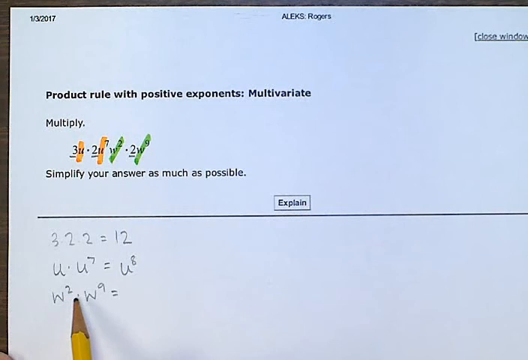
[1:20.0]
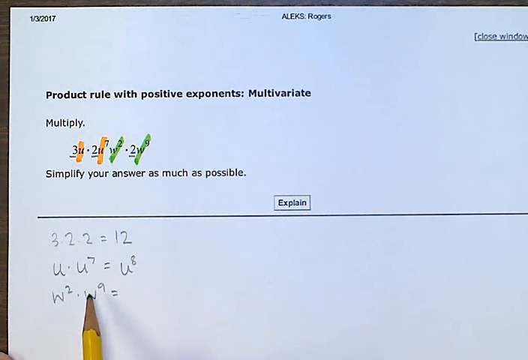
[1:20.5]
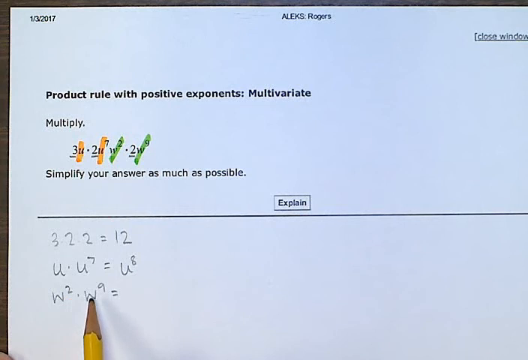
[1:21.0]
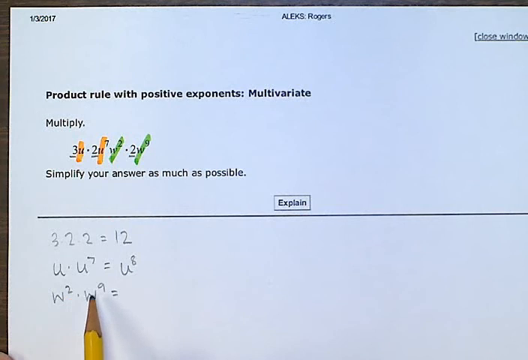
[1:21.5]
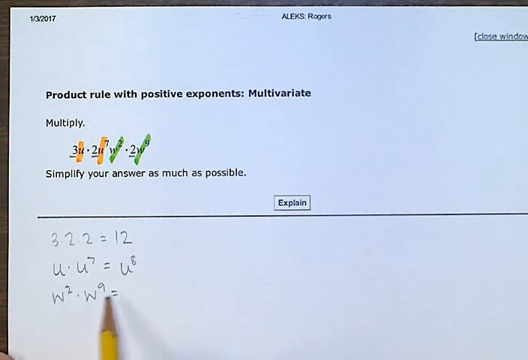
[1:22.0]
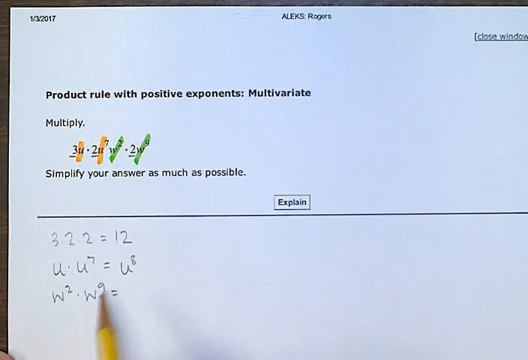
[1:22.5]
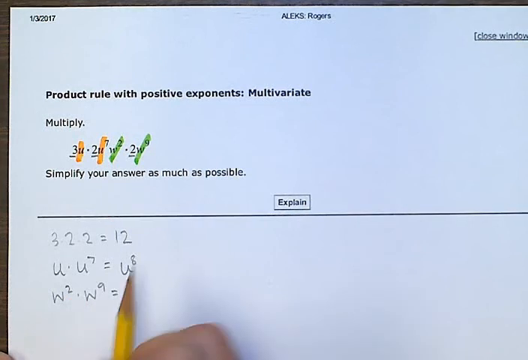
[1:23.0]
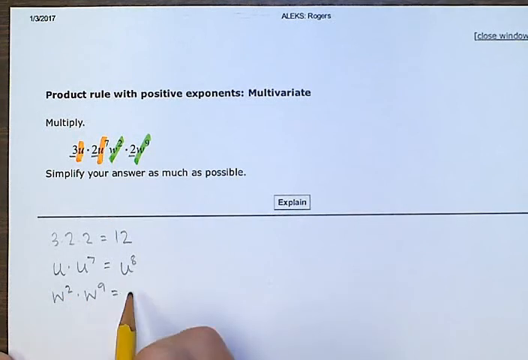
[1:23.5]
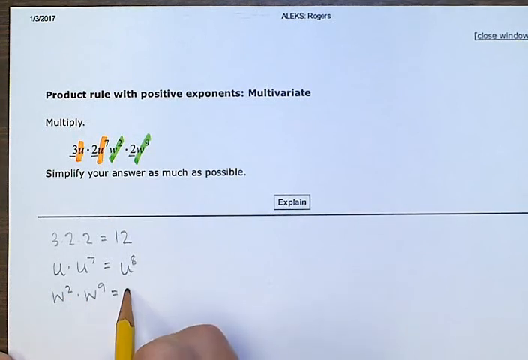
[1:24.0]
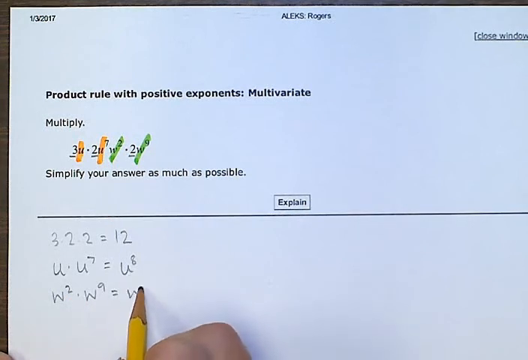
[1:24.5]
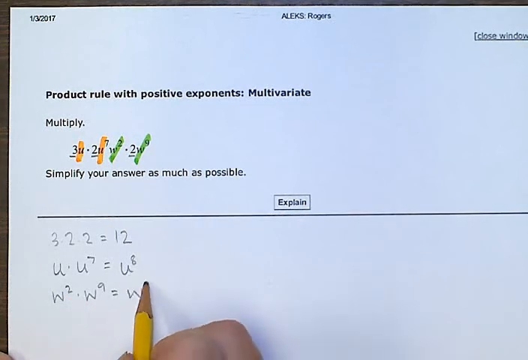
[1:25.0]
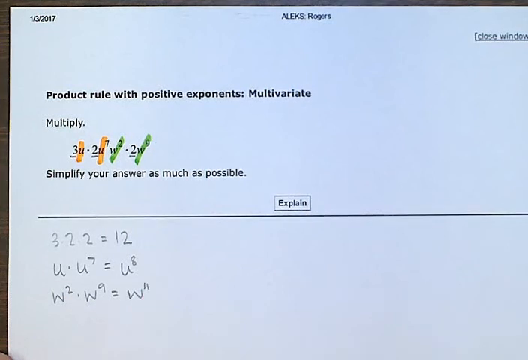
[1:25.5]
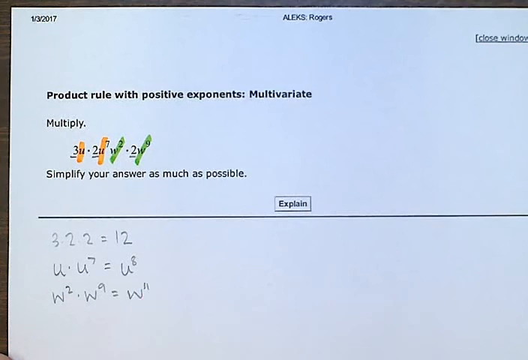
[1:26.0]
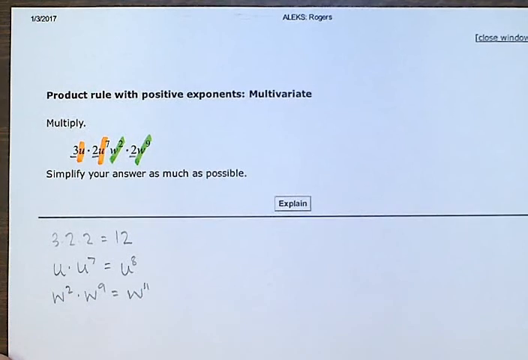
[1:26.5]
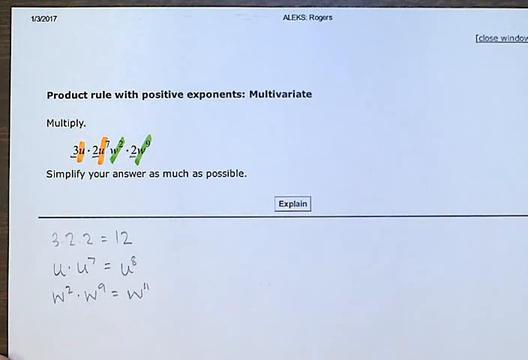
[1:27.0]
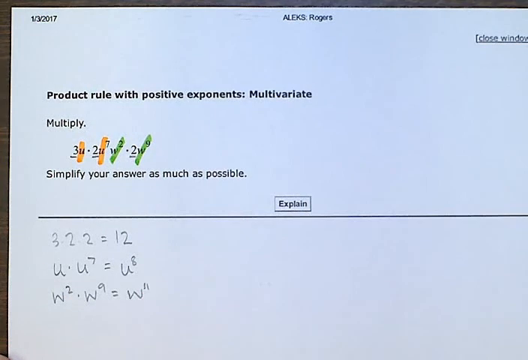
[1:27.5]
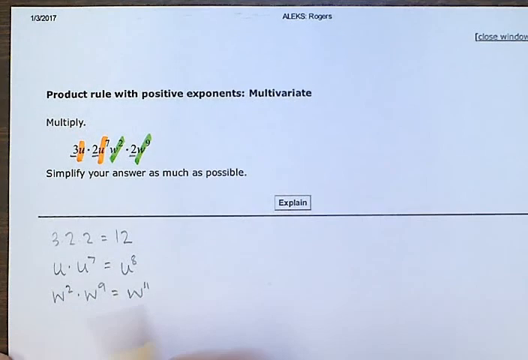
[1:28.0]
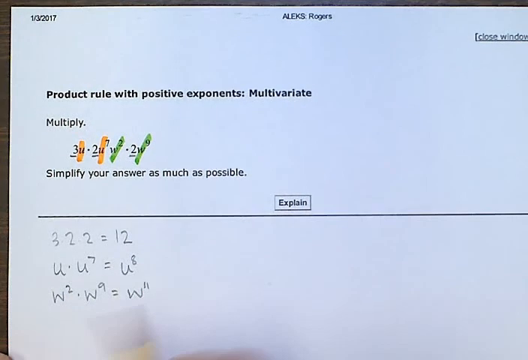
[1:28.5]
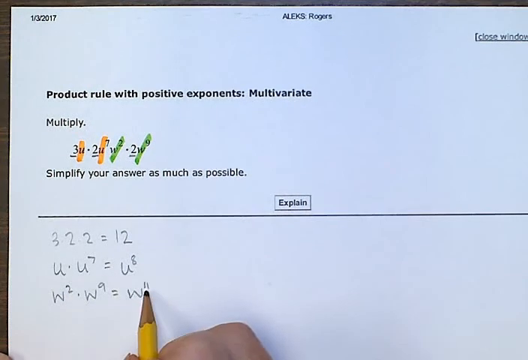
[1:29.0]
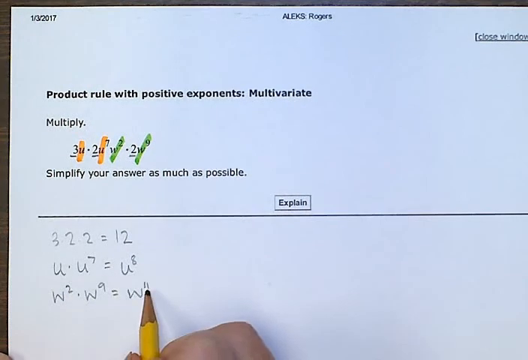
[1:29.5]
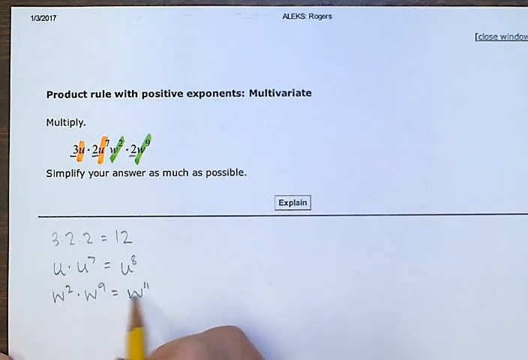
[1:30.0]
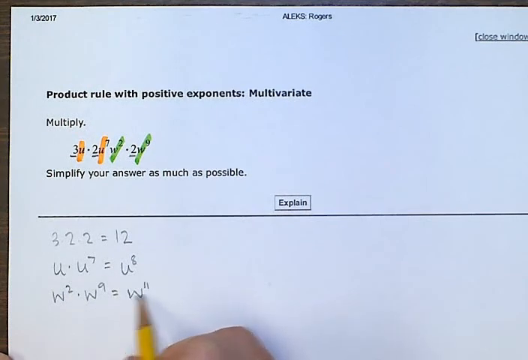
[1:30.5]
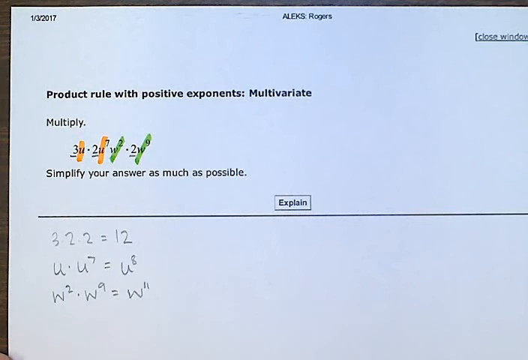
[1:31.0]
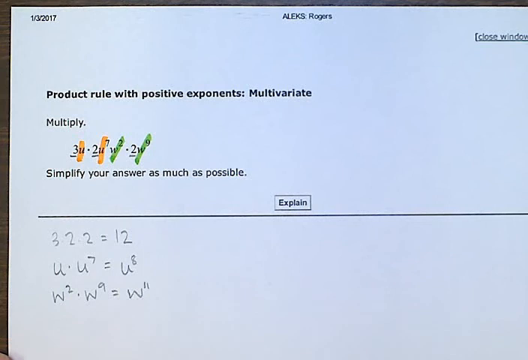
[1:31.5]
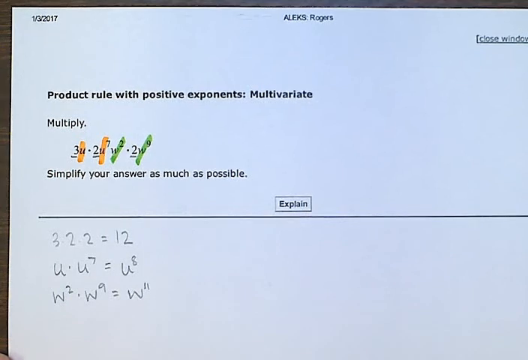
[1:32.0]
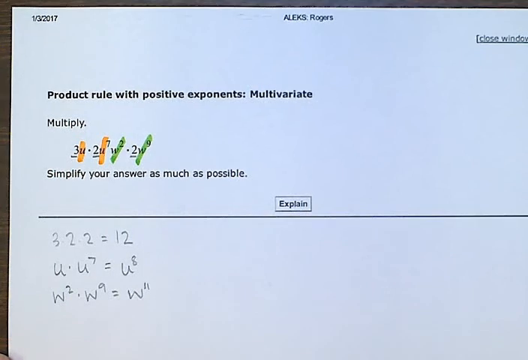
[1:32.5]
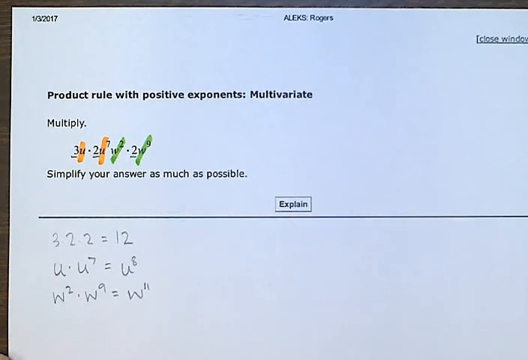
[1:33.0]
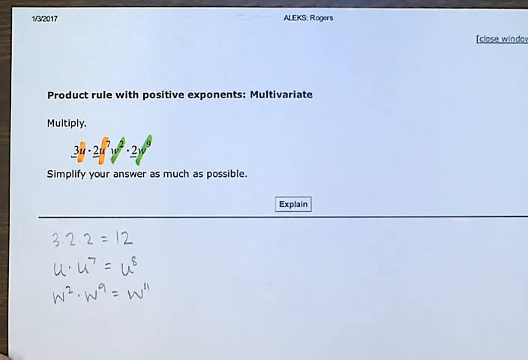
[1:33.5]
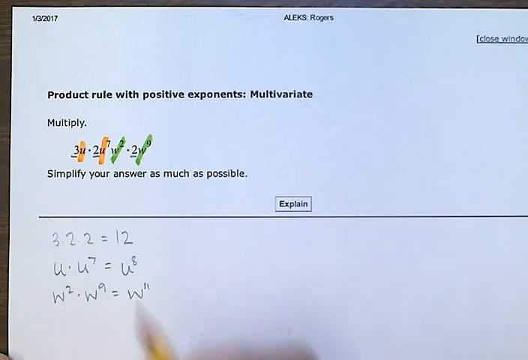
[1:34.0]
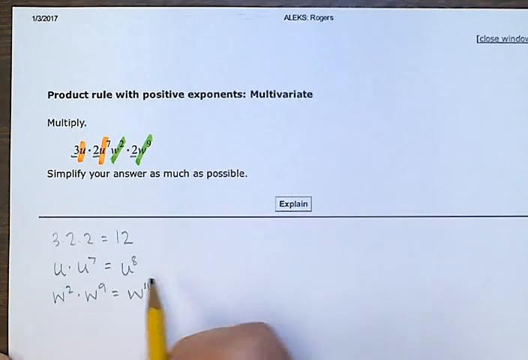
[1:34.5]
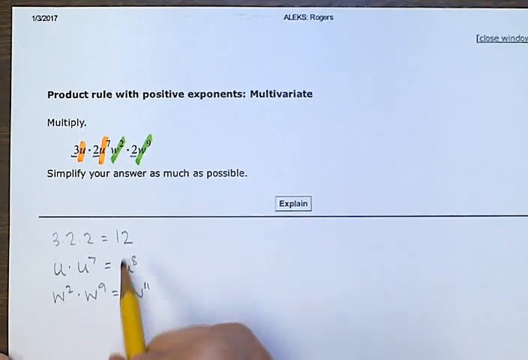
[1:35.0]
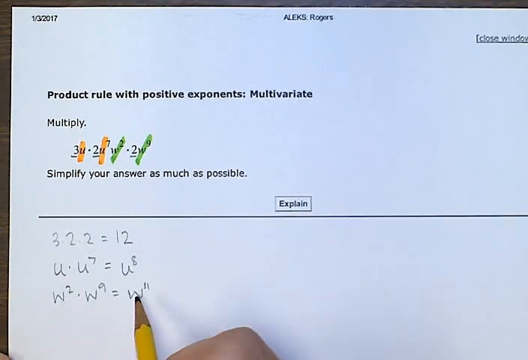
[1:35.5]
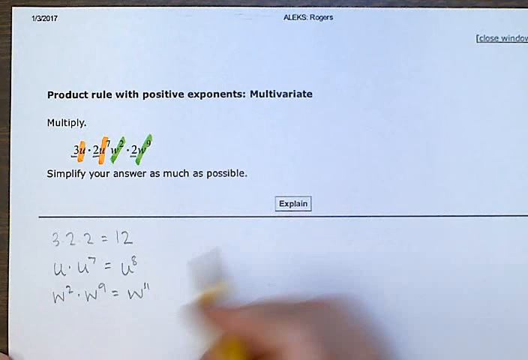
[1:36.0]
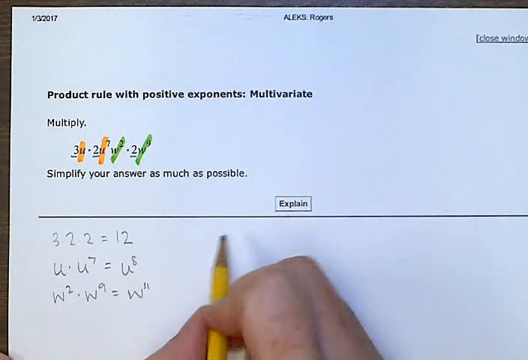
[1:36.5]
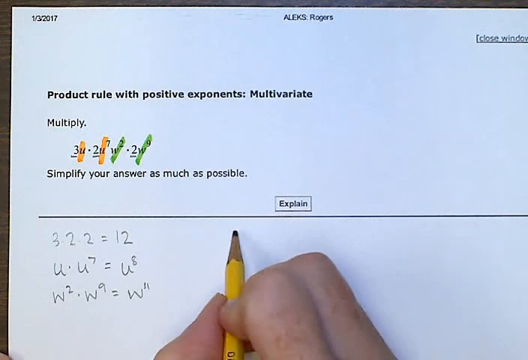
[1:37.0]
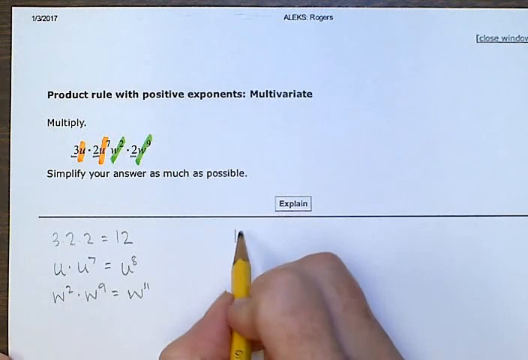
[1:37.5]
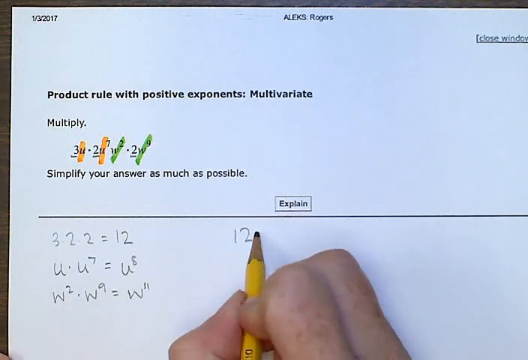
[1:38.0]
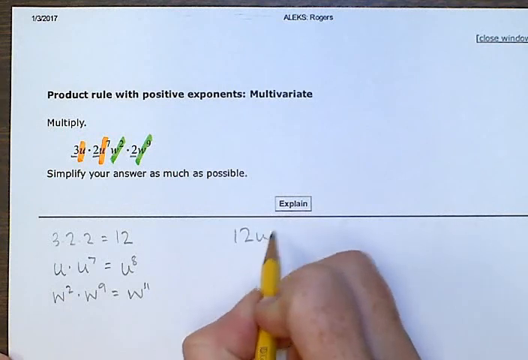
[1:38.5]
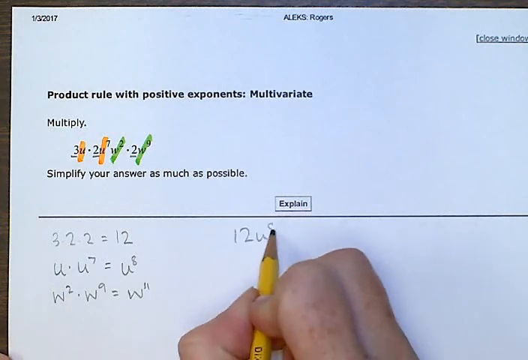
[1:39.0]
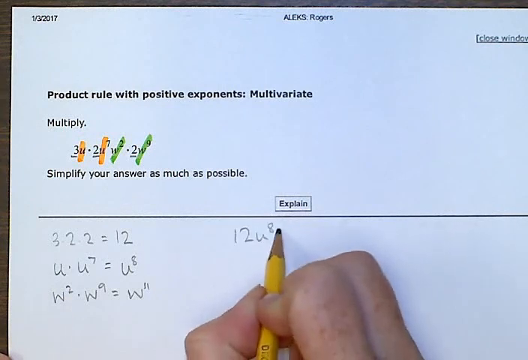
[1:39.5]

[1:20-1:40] Just the tip of the pencil is visible in the bottom left-hand corner, pointing to the bottom sum where the dot is in the middle of the equation. The pencil moves from left to right along the W2.W9 equals sum without marking the paper. It then goes to the position right after the equals sign and writes another section of the sum: W11. The pen hovers underneath W11, then the pencil goes up to the side of the first sum. On the same line, with a space, they start to write 12u8 in a new column in the centre of the page.